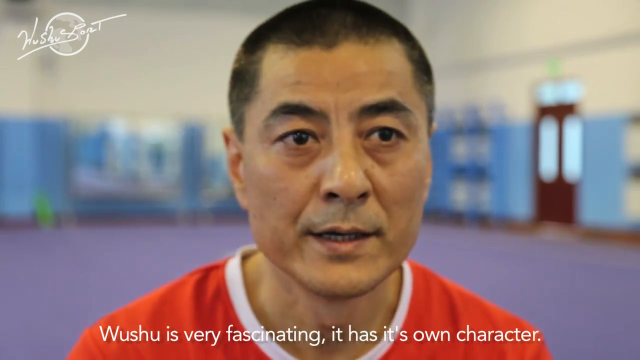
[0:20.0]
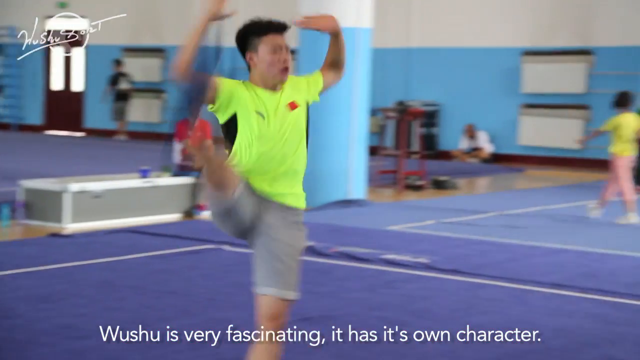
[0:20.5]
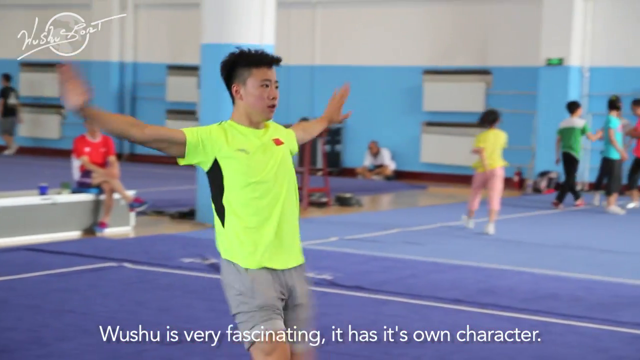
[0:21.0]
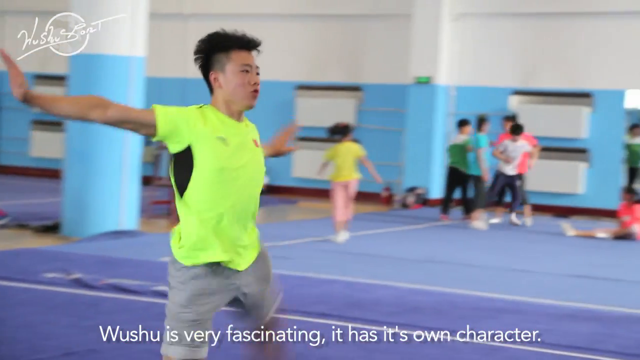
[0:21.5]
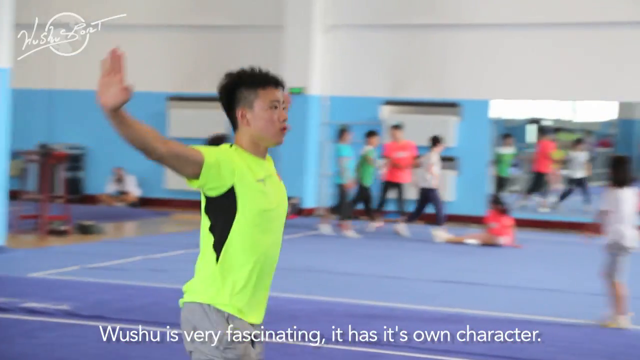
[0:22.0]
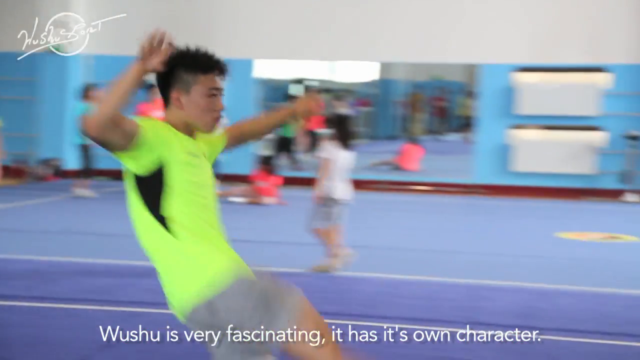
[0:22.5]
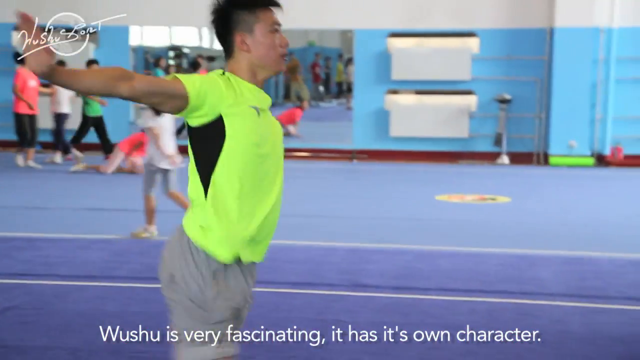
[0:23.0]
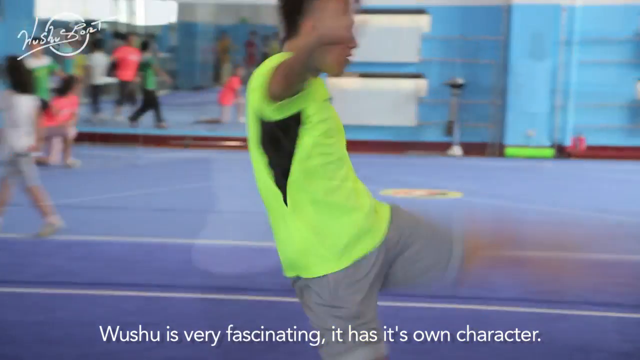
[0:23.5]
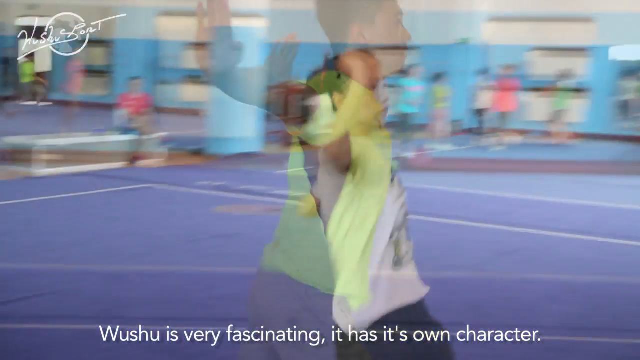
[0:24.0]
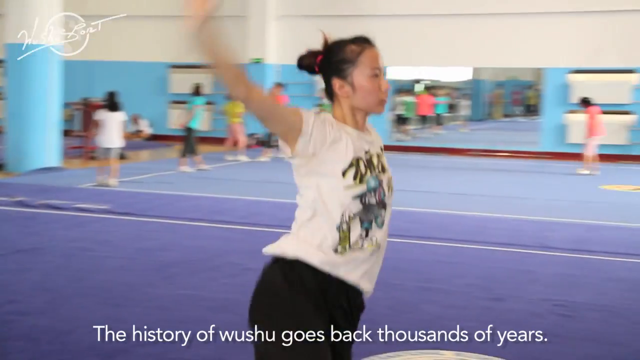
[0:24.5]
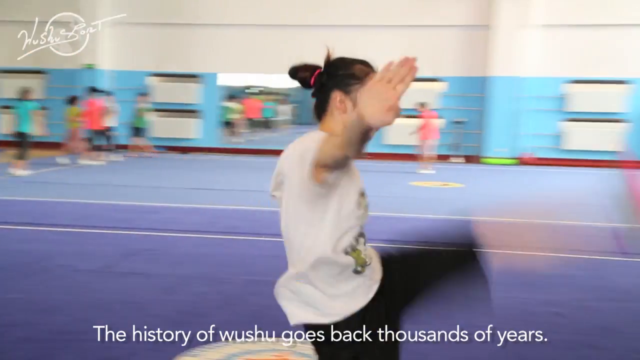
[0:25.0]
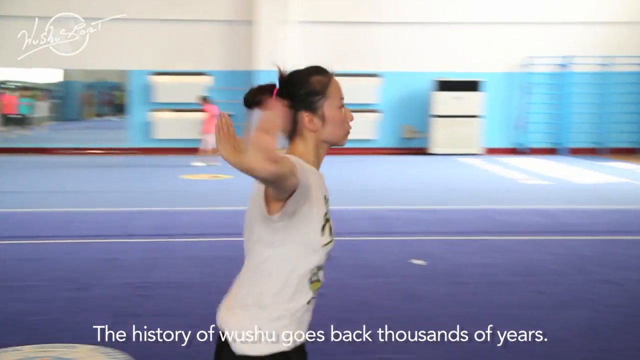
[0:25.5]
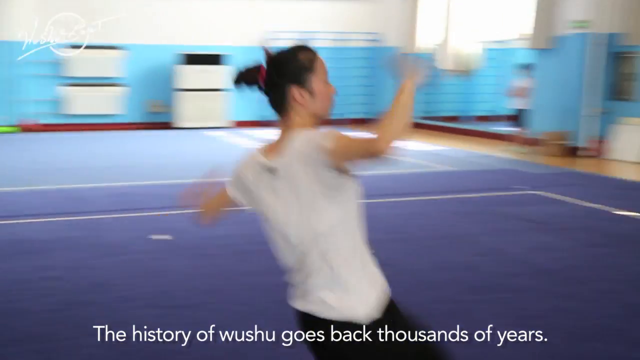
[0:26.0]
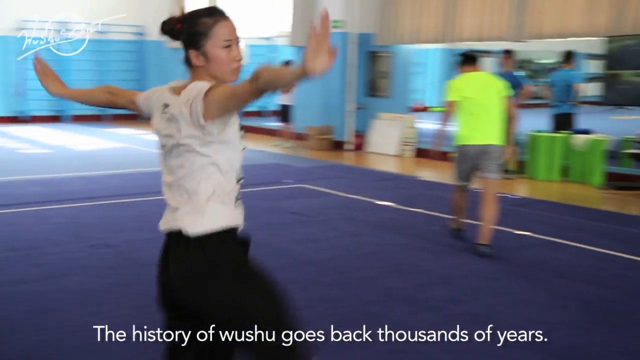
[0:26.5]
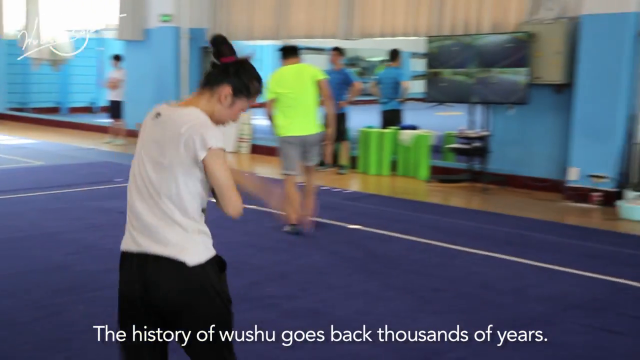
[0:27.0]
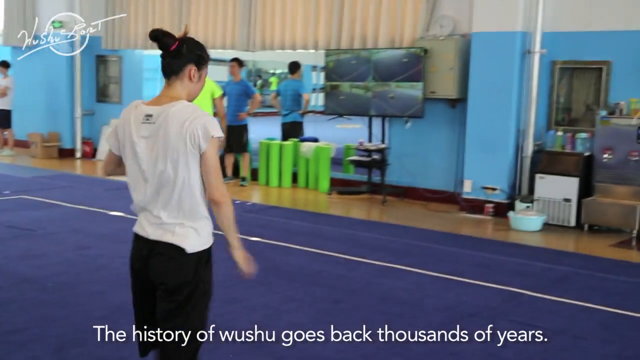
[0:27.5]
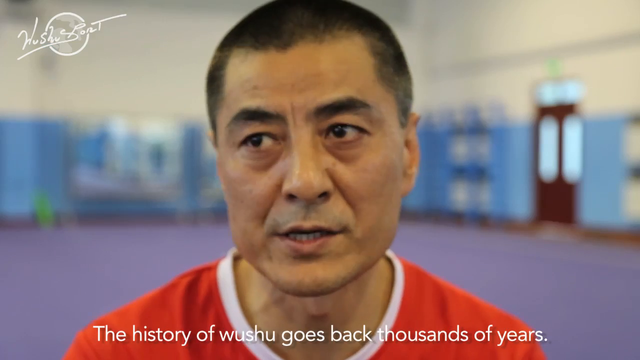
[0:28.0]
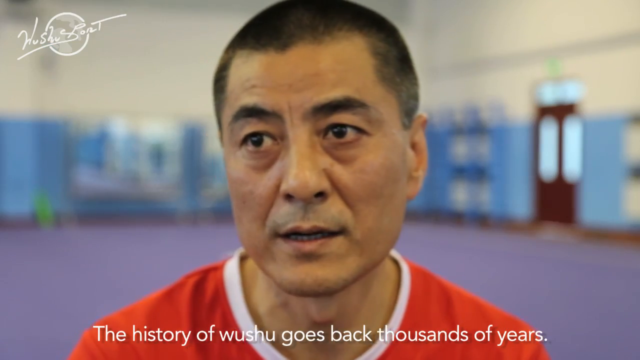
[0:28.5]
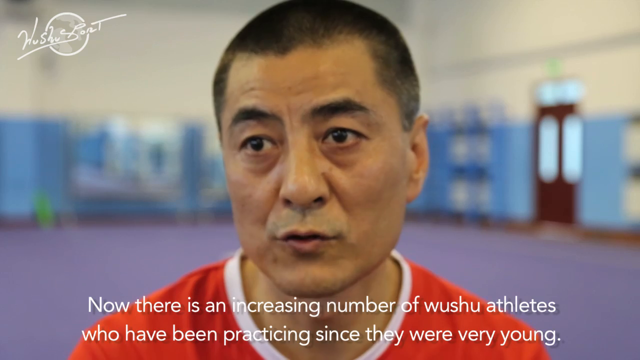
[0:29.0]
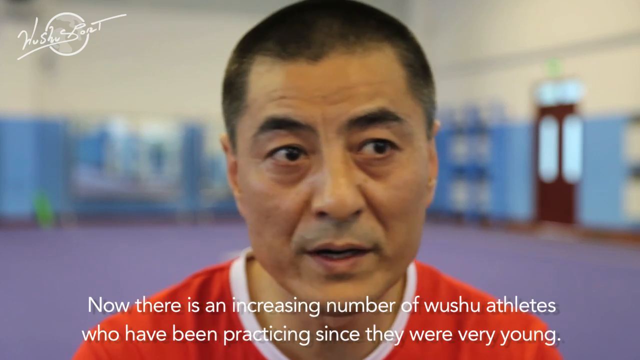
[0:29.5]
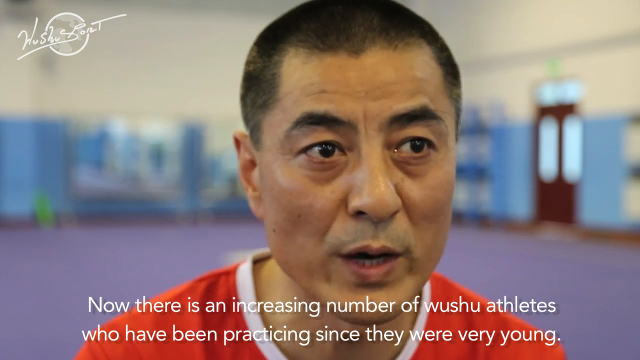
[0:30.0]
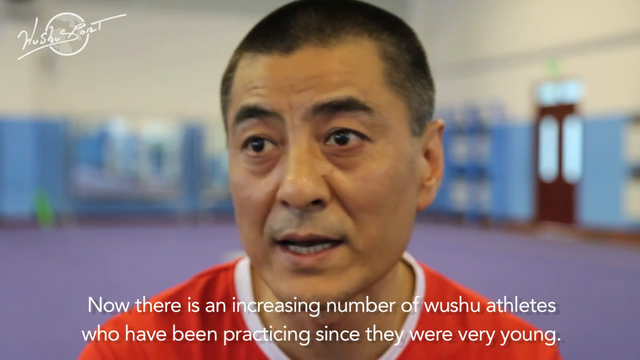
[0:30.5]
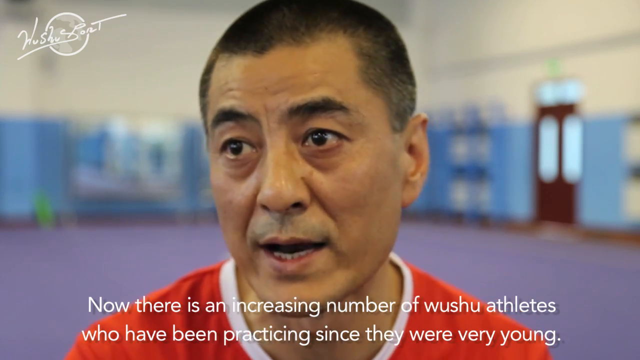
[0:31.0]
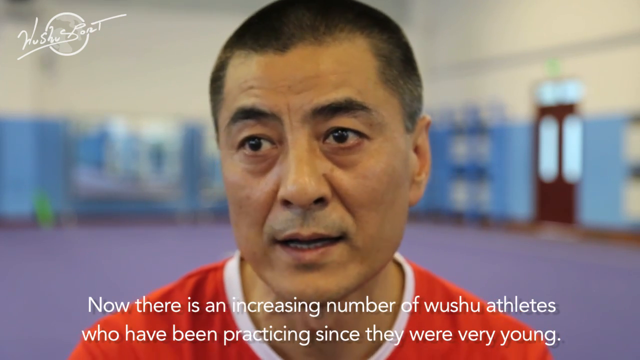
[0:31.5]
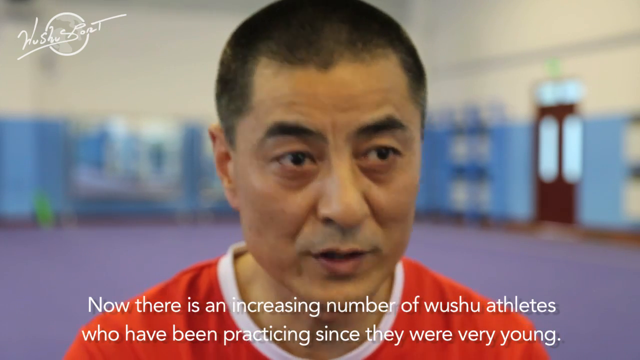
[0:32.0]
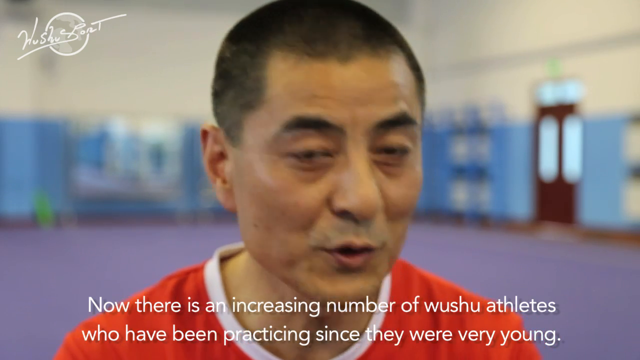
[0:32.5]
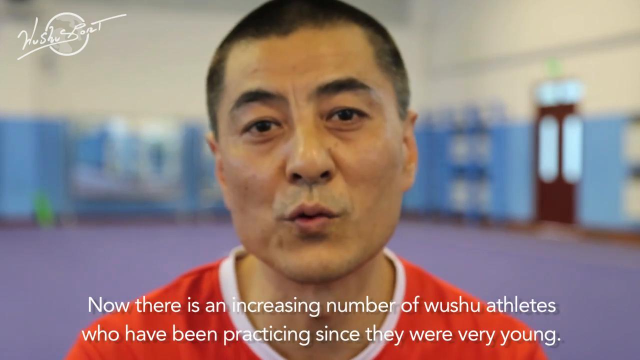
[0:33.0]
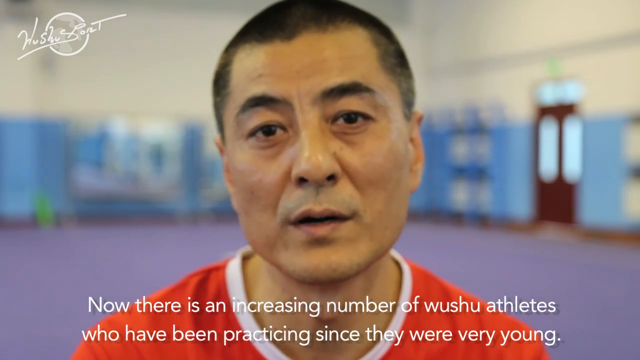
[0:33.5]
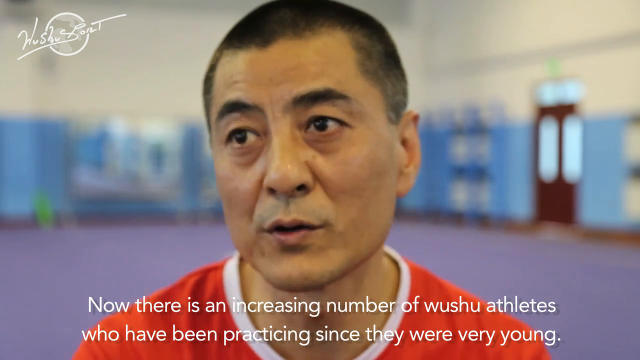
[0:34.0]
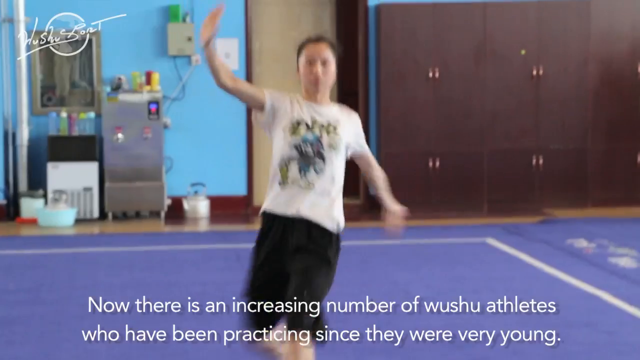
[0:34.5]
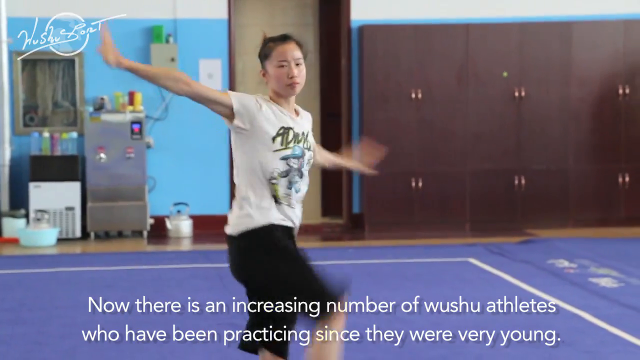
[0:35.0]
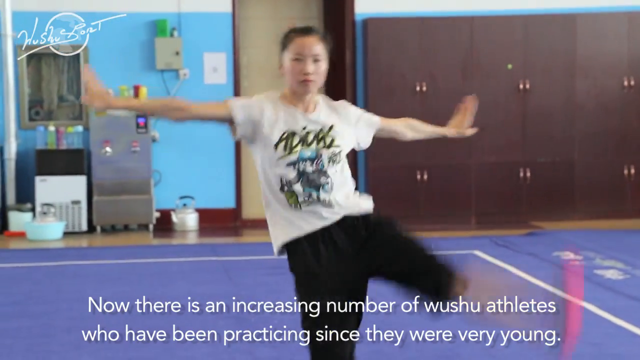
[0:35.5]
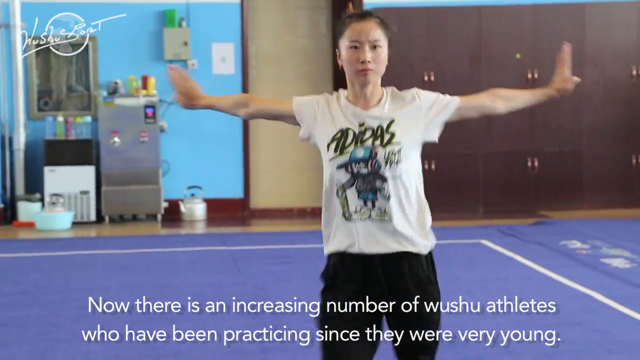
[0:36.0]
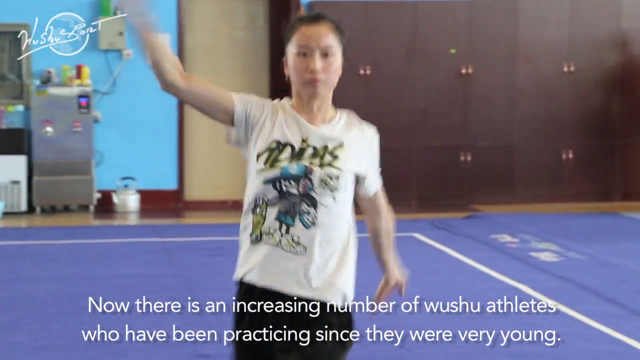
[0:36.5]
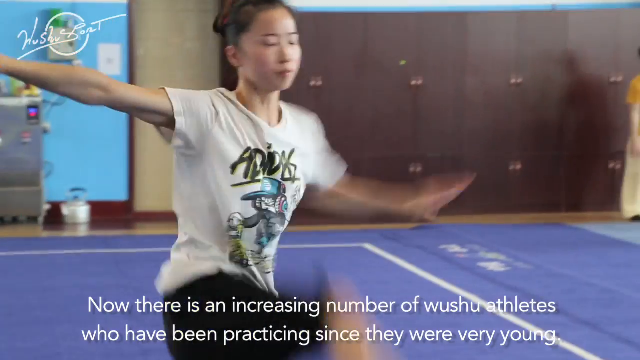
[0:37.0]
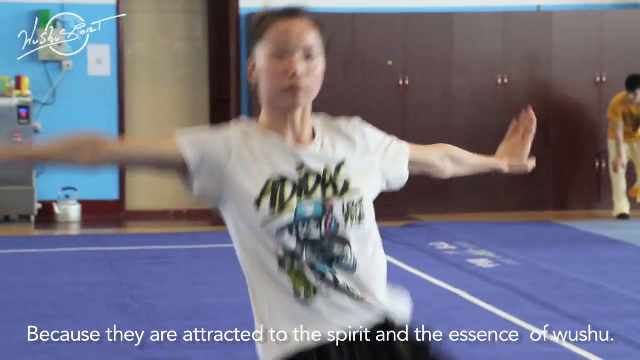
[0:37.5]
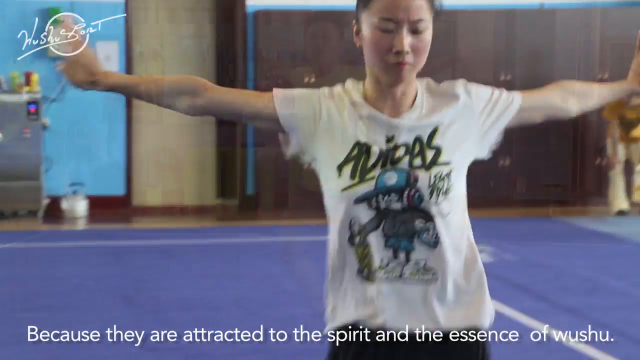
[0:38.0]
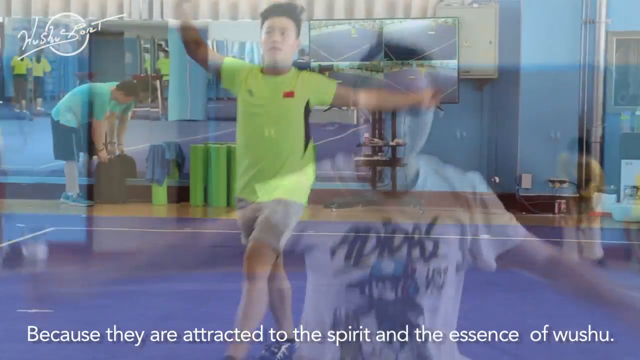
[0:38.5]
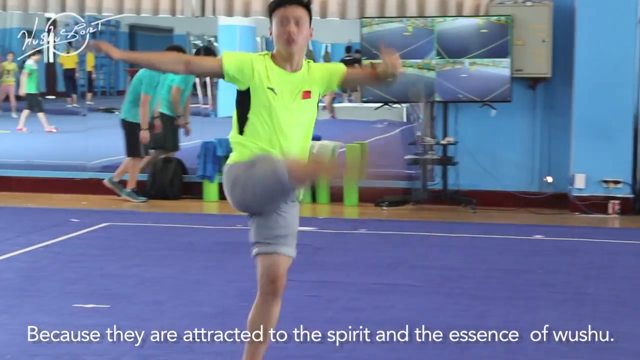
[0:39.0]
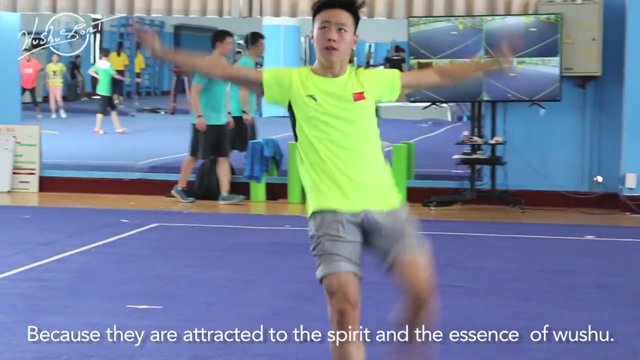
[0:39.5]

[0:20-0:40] The scene is in a very large room that looks like a gym, with no furniture. The top of the walls is white and the bottom is blue, and the floor is covered with purple and blue mats. An Asian man with short black hair, seen from the shoulders up, wears a red shirt with a white stripe around the collar. As he talks, captions appear along the bottom of the screen: "Wushu belongs to the whole world. Now Wushu is very fascinating it has its own character. The history of Wushu goes back thousands of years." Meanwhile, an Asian boy with black hair in a fluorescent yellow shirt and black shorts walks forward; every few steps he kicks a leg up in front of him, spins it inward and sets it down, then does the same with the other leg. An Asian girl with long black hair pulled back in a ponytail, wearing a short-sleeved white shirt and black shorts, does the same exercise. In the background people walk around, and there is a mirror up on the wall. The video cuts back to the man in the red shirt, sitting and speaking to the camera, with captions reading "now there's an increasing number of wushu athletes who have been practicing since they were very young because they are attracted to the spirit and the essence of wushu".